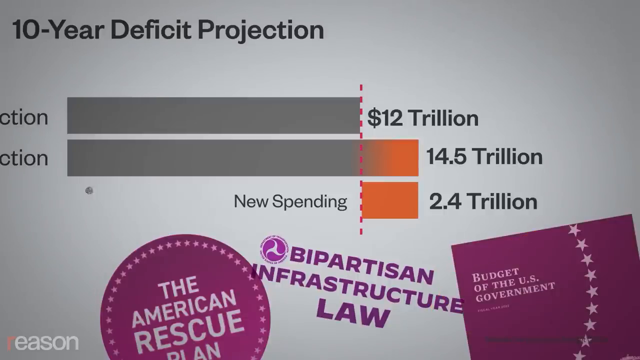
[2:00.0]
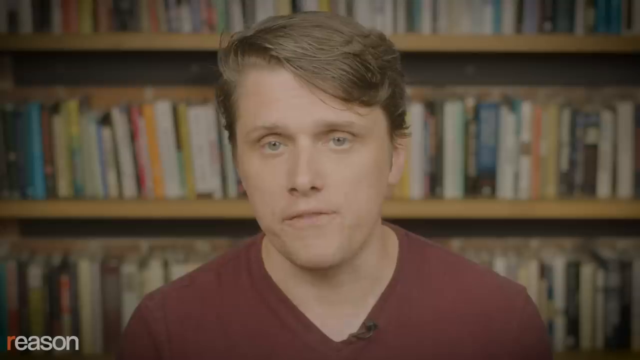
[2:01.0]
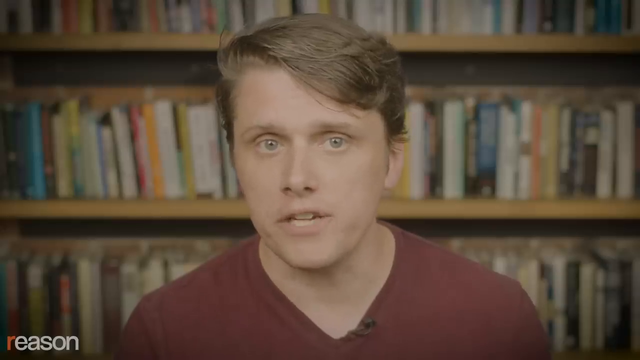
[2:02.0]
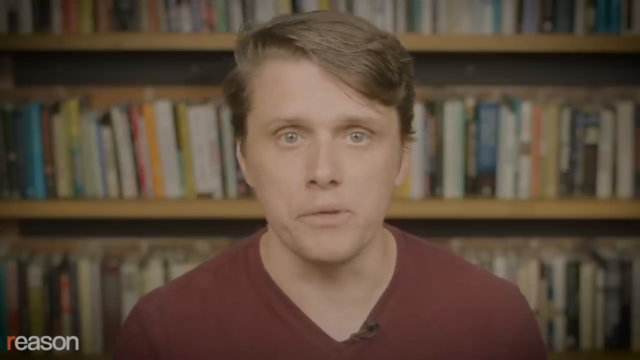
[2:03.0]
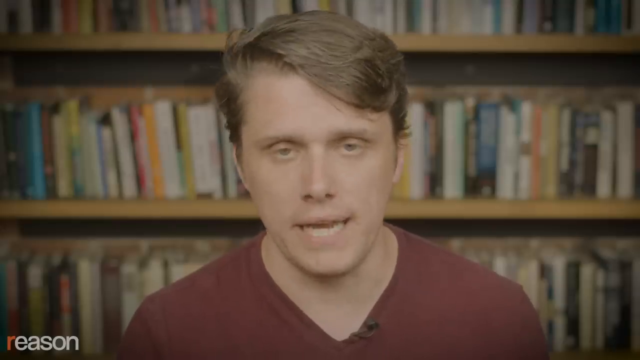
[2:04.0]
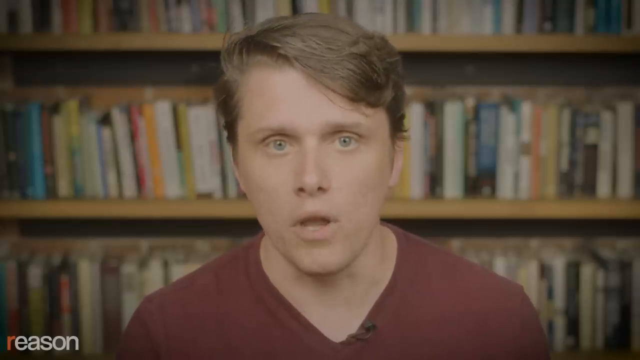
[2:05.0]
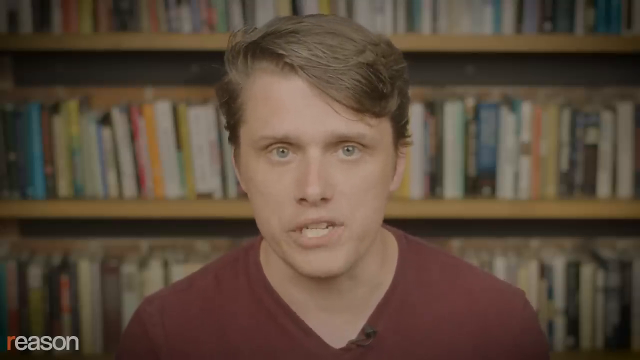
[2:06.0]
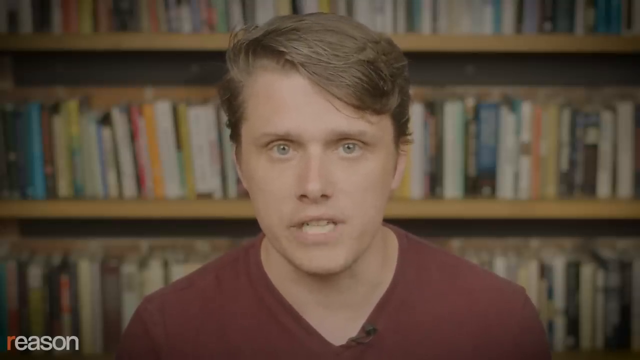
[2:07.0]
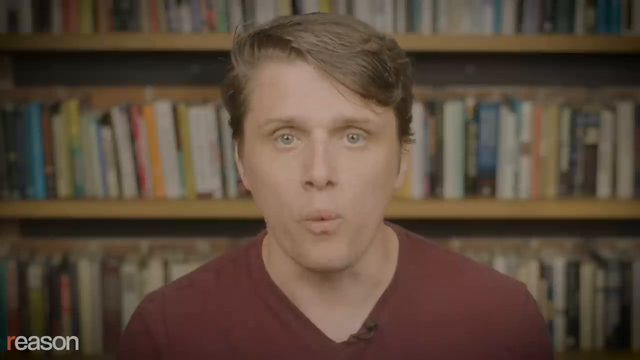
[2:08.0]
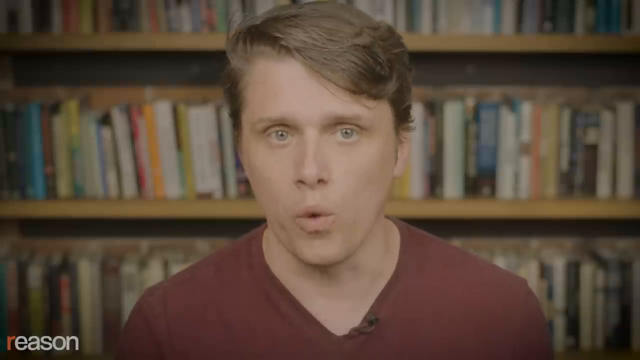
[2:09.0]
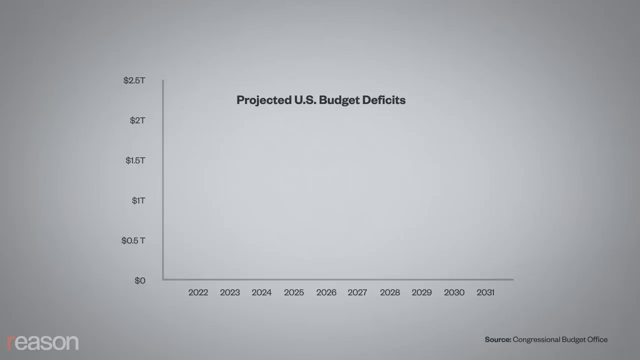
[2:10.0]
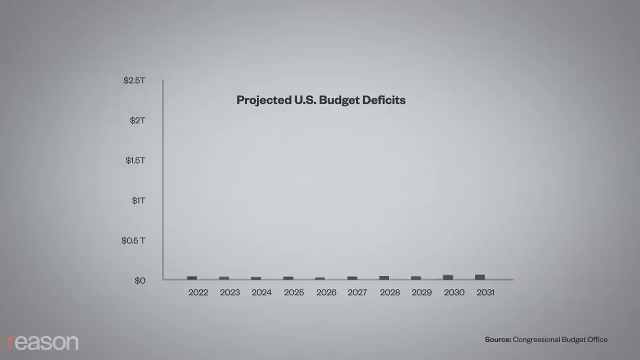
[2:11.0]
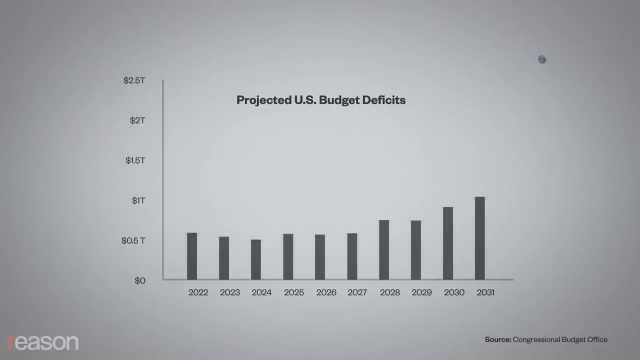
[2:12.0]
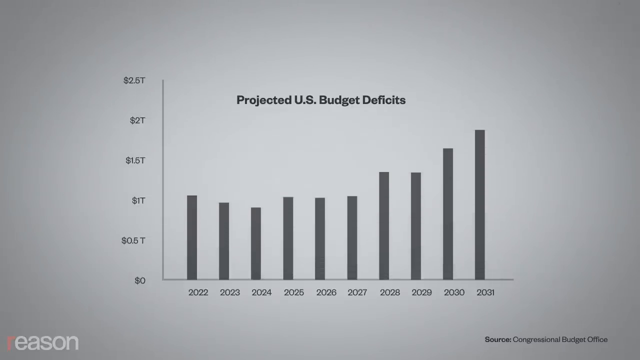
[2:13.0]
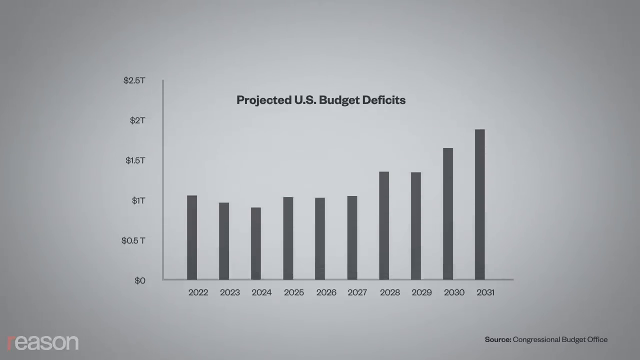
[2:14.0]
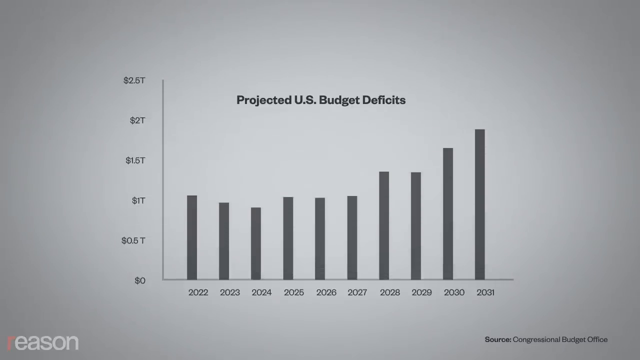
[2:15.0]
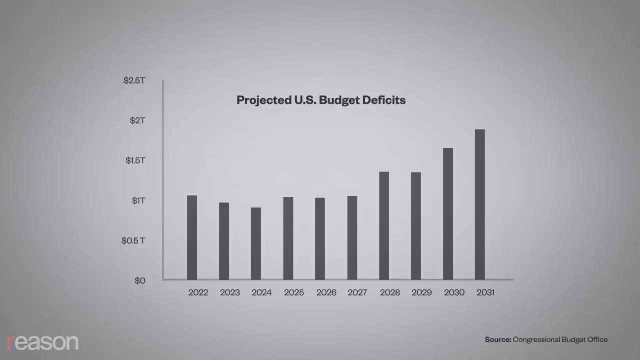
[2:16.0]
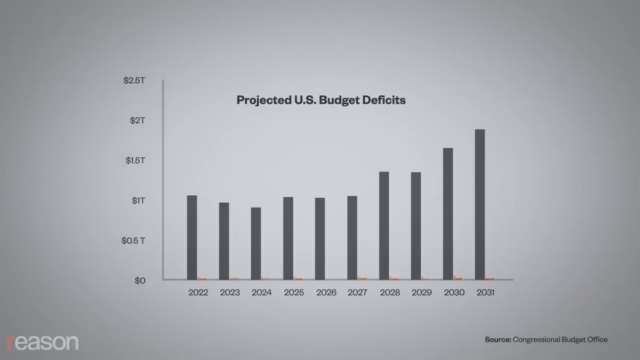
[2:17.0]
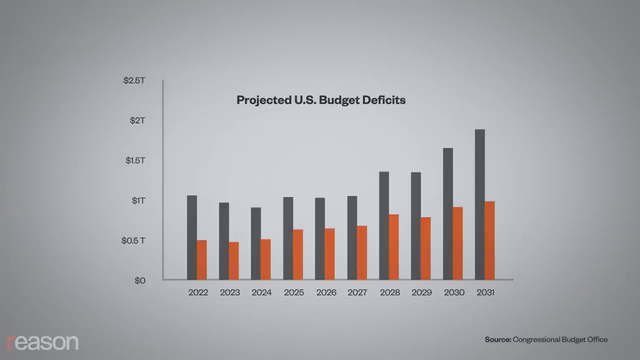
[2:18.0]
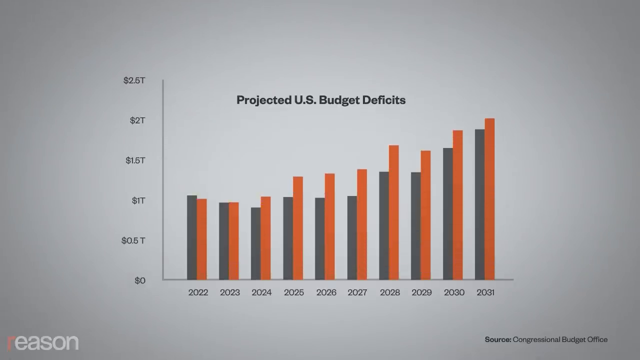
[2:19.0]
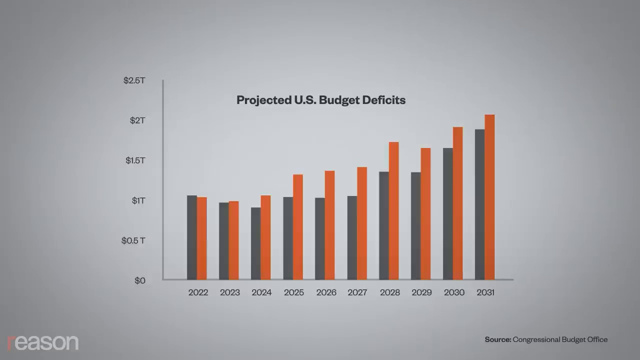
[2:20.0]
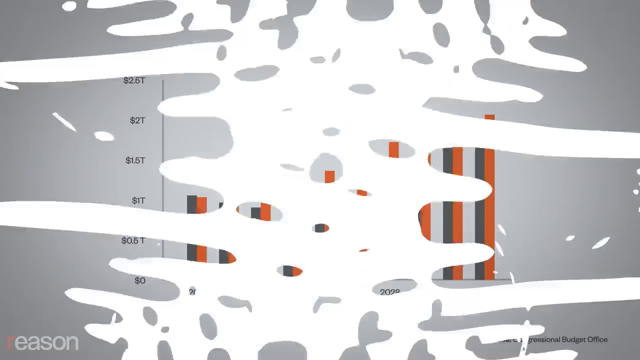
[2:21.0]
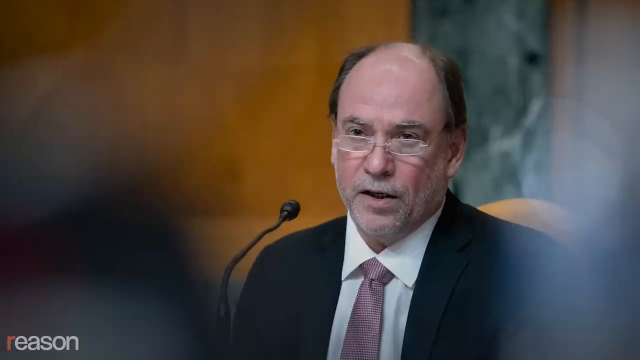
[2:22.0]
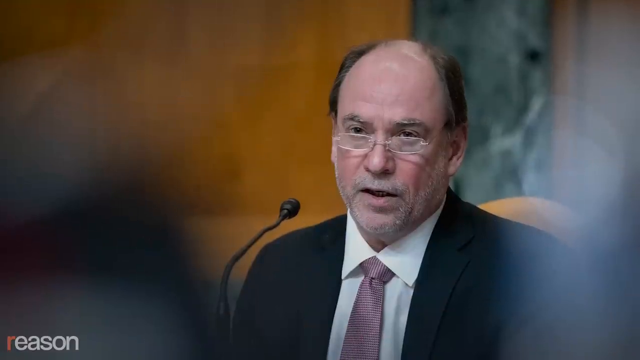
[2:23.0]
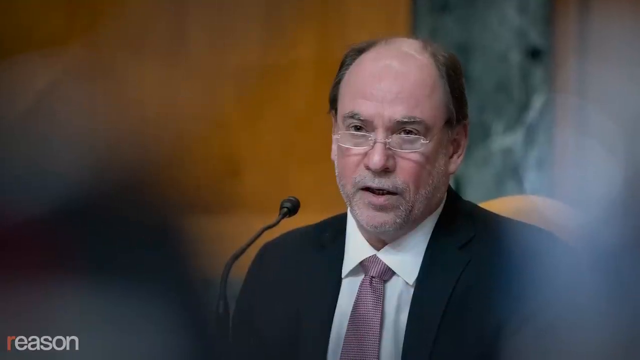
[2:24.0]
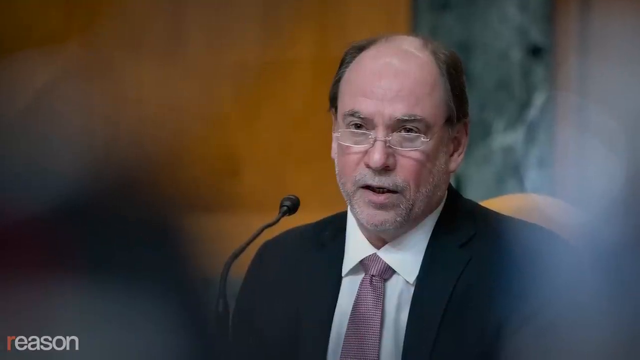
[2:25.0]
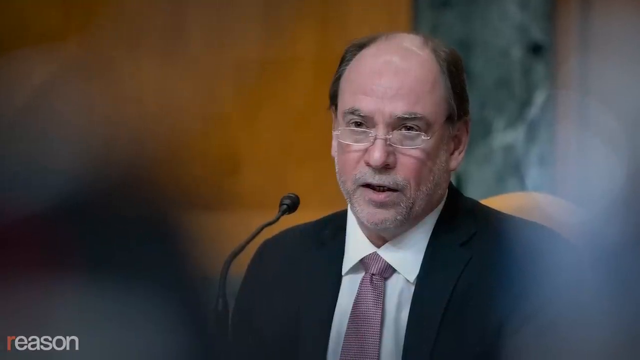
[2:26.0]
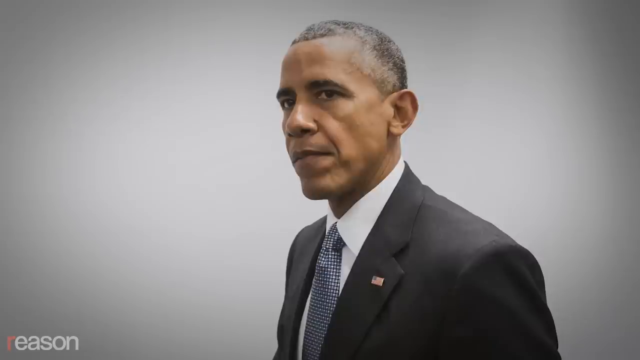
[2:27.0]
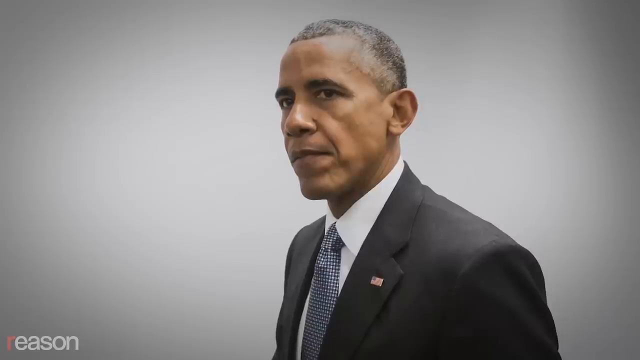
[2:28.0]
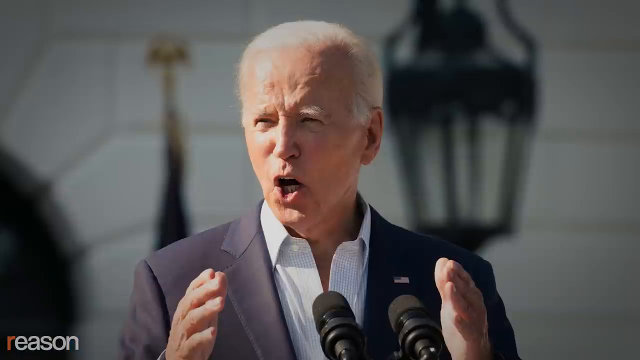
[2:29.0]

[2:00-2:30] A quick flash of the previous bar graph gives way to Eric speaking. Another bar graph of projected US budget deficits follows, covering several years with gray bars and orange bars that go up. The video then briefly shows another man who appears somewhat older, maybe in his 50s, and who is not identified. Next, former President Obama appears very briefly in a suit, followed by Donald Trump, and then Joe Biden, who appears to be outside speaking, wearing a suit with no tie.